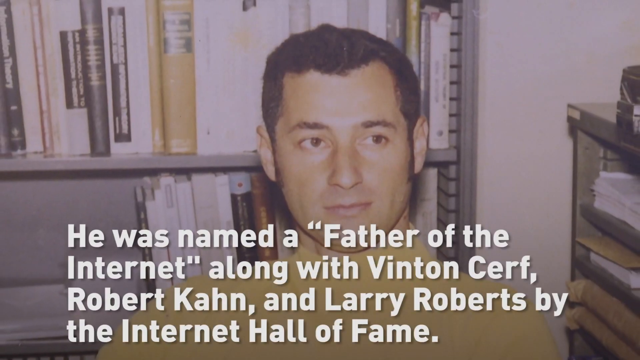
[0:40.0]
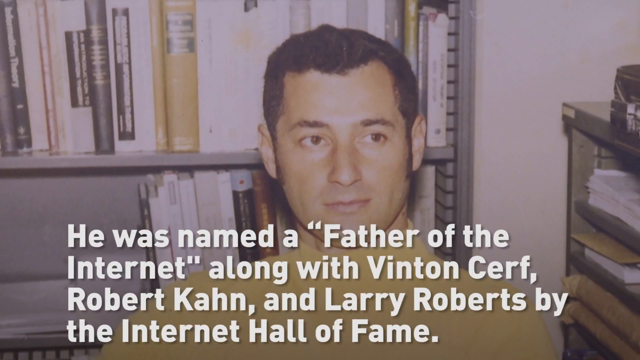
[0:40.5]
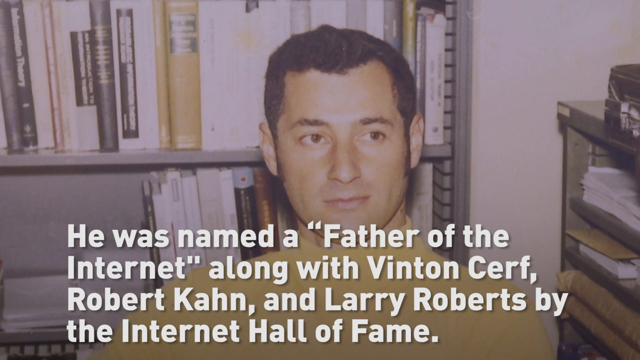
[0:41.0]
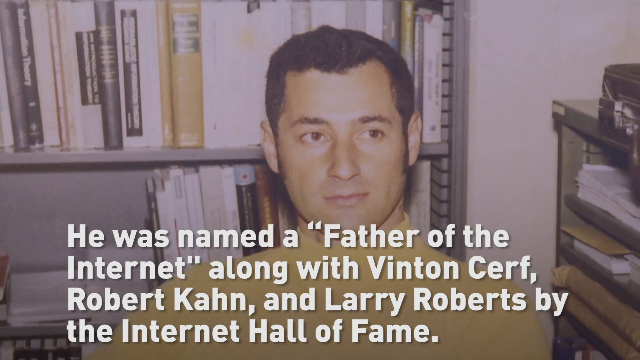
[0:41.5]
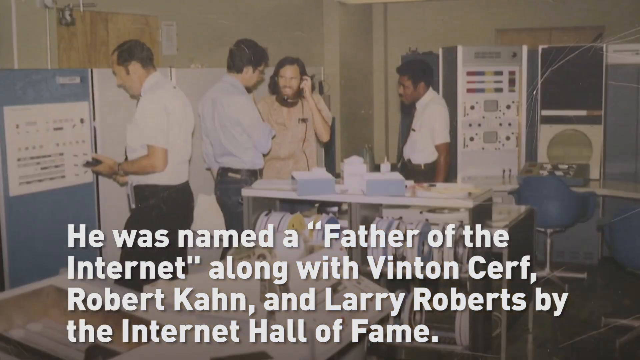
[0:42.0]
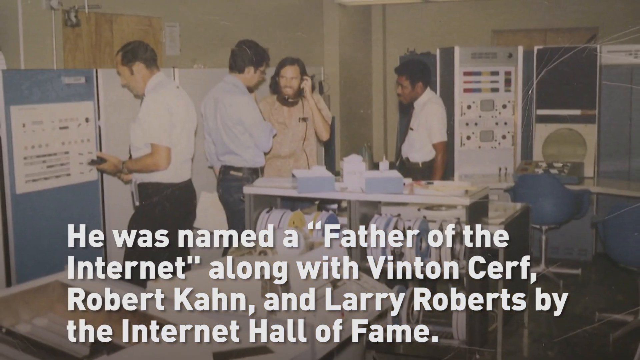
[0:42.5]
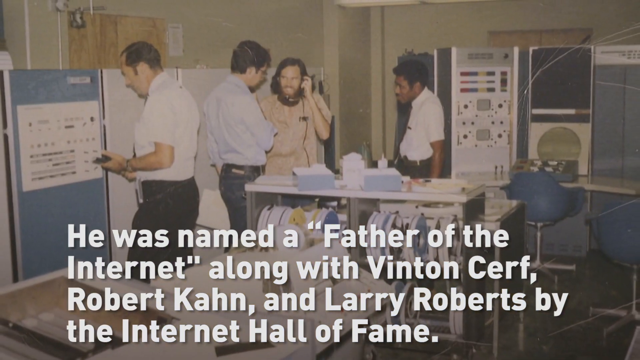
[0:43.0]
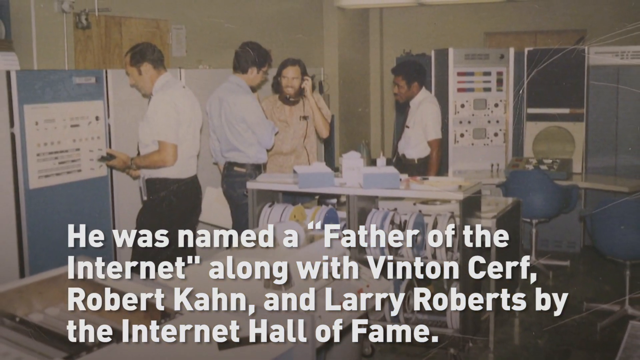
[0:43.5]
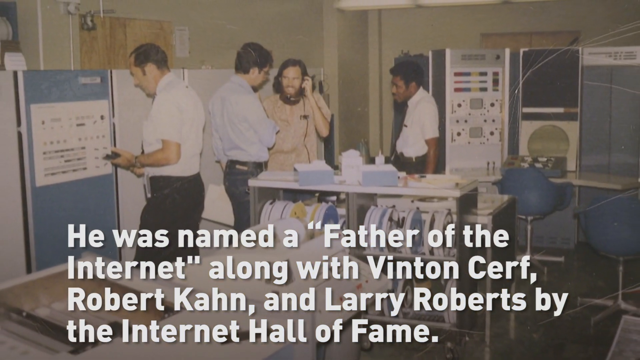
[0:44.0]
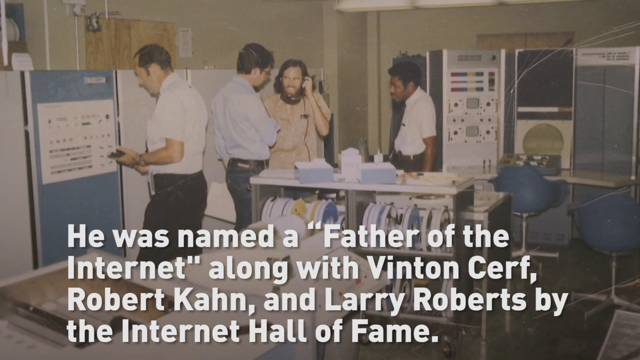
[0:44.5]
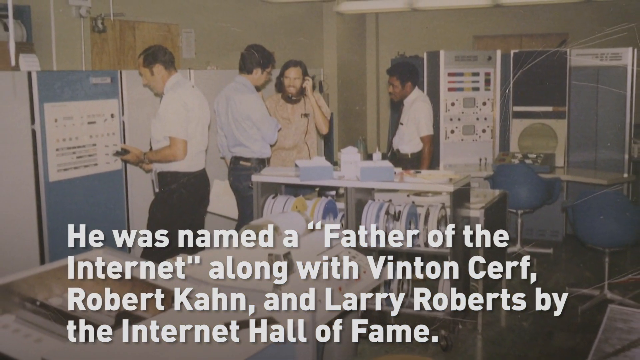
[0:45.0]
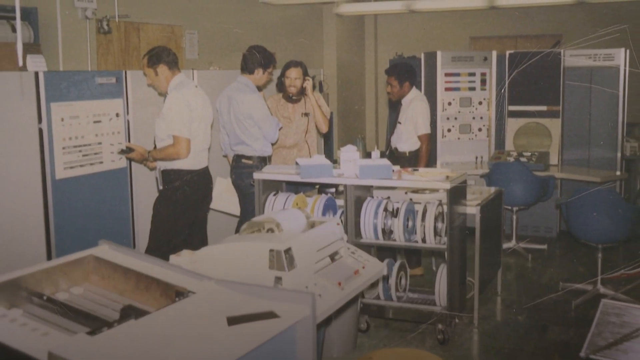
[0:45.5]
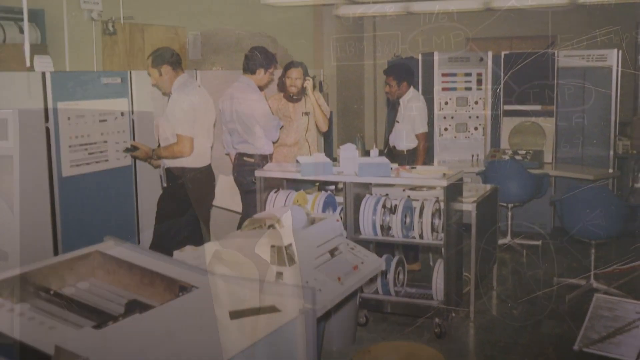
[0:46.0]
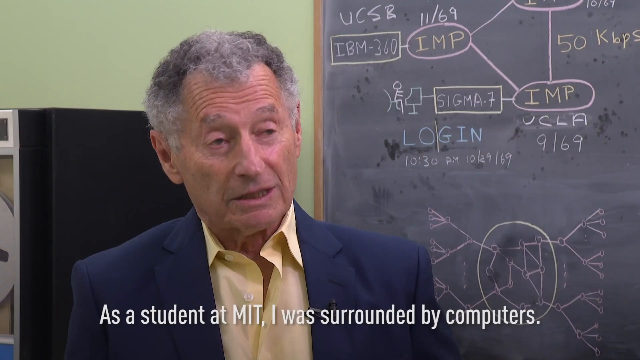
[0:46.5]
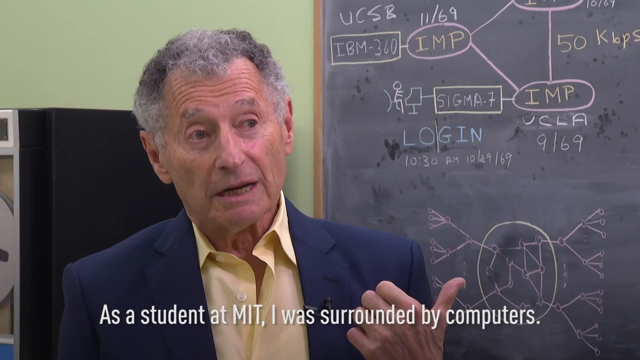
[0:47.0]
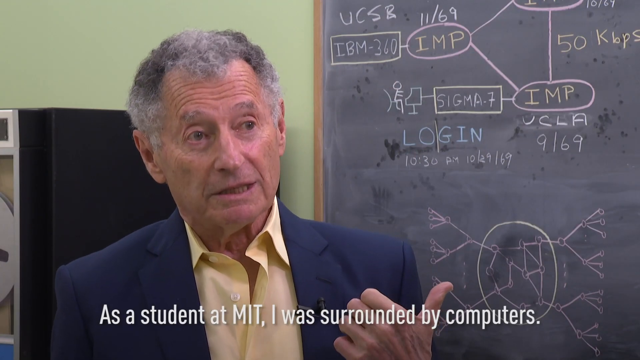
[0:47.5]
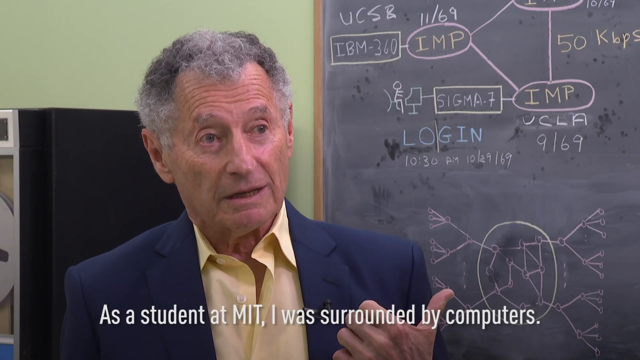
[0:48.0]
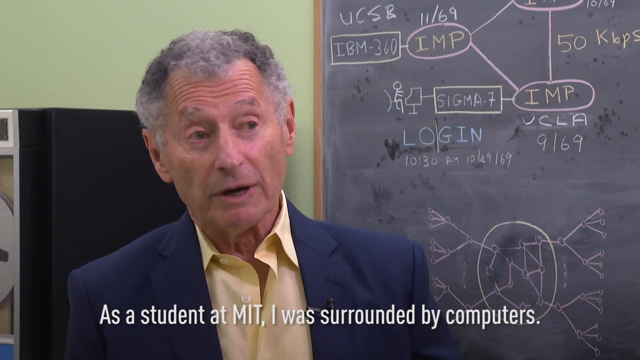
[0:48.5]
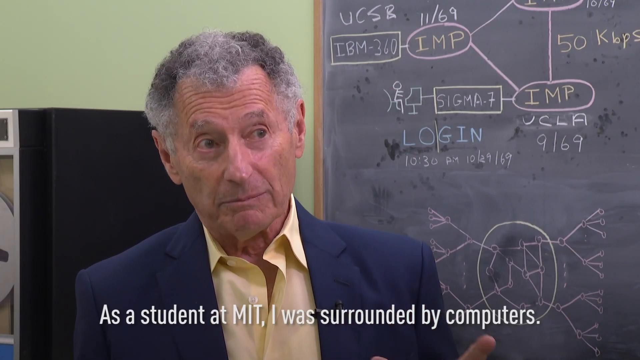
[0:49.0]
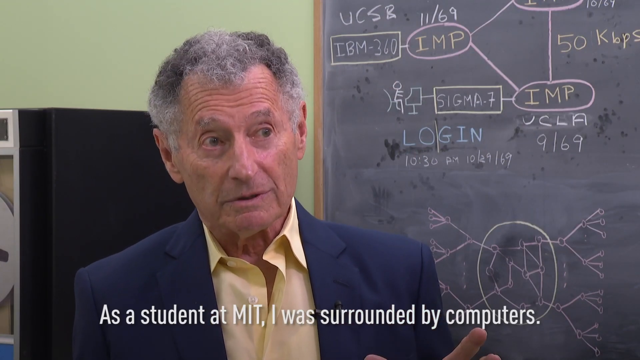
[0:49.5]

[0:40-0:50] A close-up shows a young man with short black hair and a yellow shirt sitting in front of a bookcase and looking off to the side. The caption reads, He was named a "Father of the Internet" along with Vinton Cerf, Robert Kahn, and Larry Roberts by the Internet Hall of Fame. The scene switches to four men working in a computer lab: a man on the left looks at a large computer against the wall, two men face each other in the center, the one on the right apparently wearing headphones, and on the far right another man leans his left hand on a desk he is standing behind. Large computers against the walls surround them. Then a close-up shows an older man with gray hair standing in front of a blackboard with computer programming information written on it. He looks at someone and gestures behind him, and the caption reads, "As a student at MIT, I was surrounded by computers."